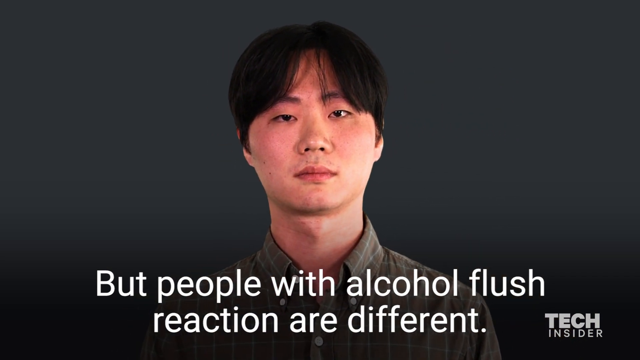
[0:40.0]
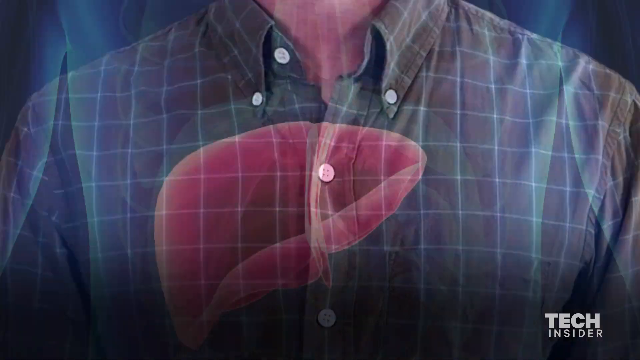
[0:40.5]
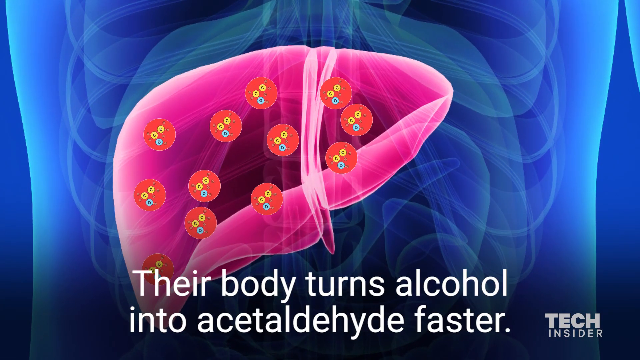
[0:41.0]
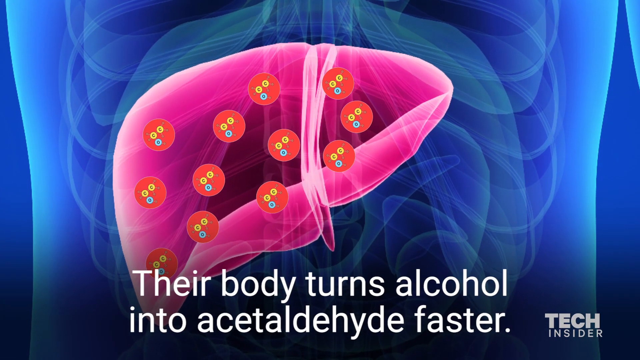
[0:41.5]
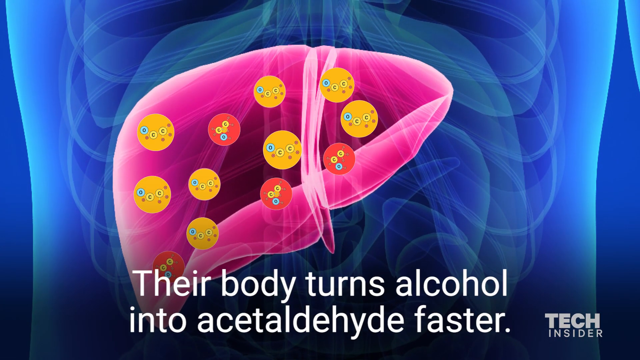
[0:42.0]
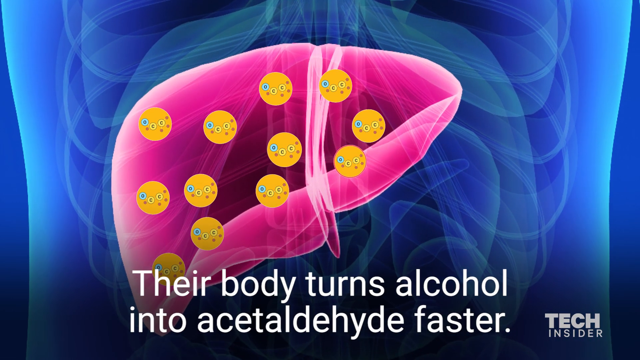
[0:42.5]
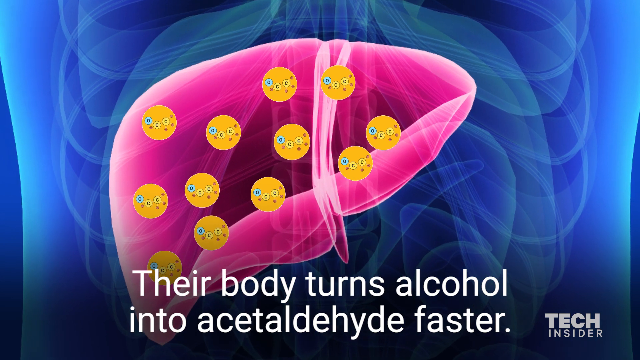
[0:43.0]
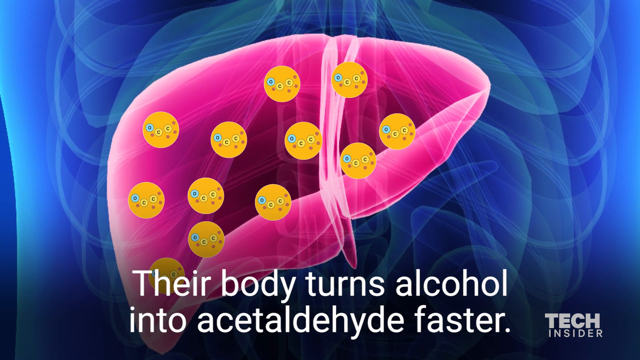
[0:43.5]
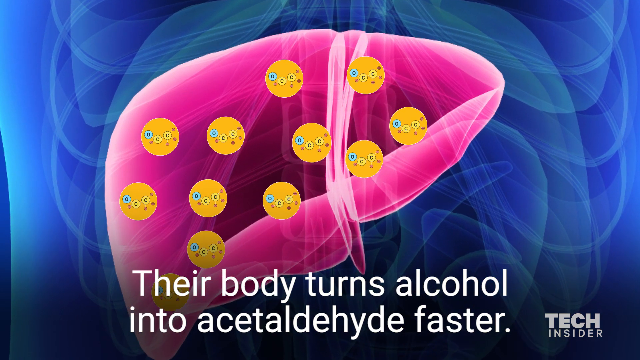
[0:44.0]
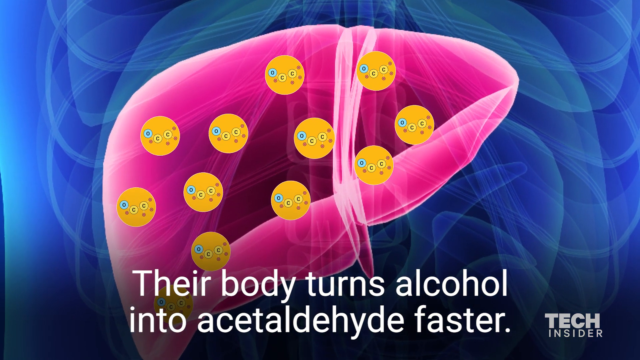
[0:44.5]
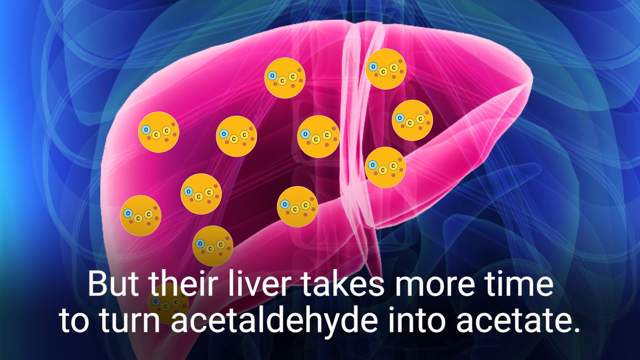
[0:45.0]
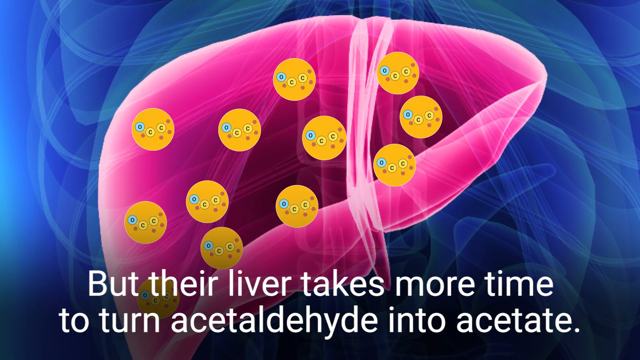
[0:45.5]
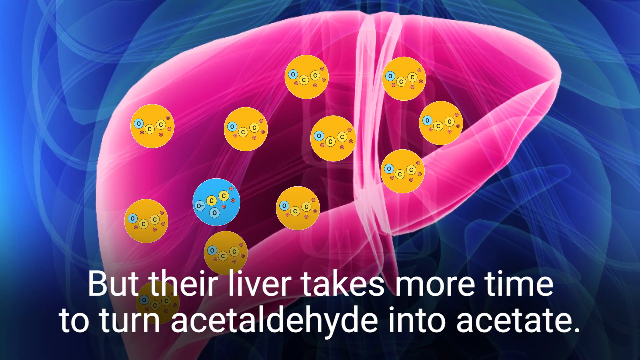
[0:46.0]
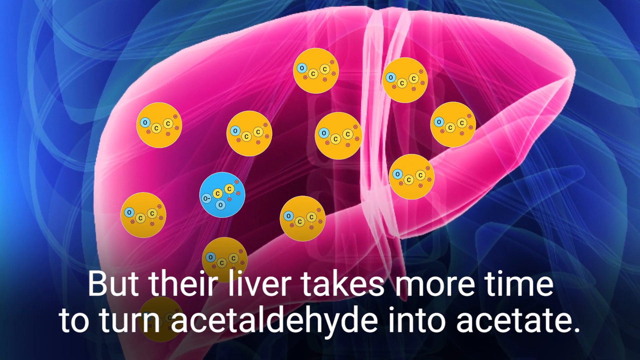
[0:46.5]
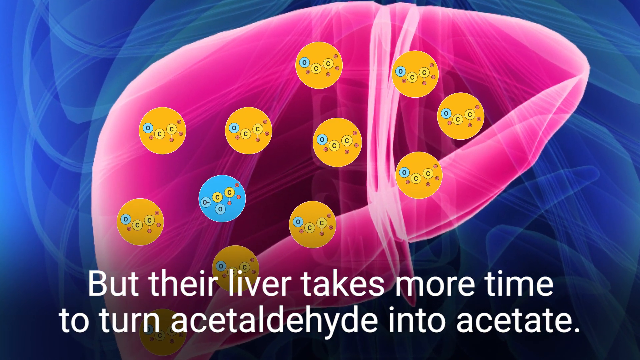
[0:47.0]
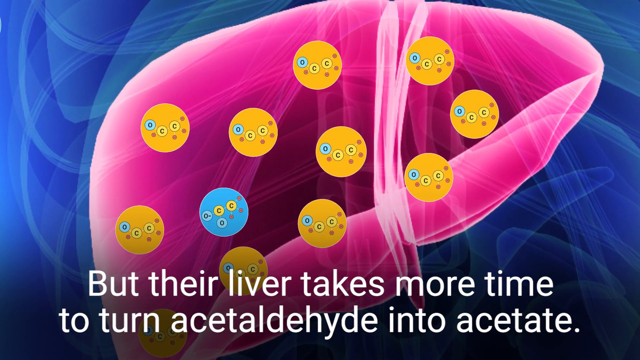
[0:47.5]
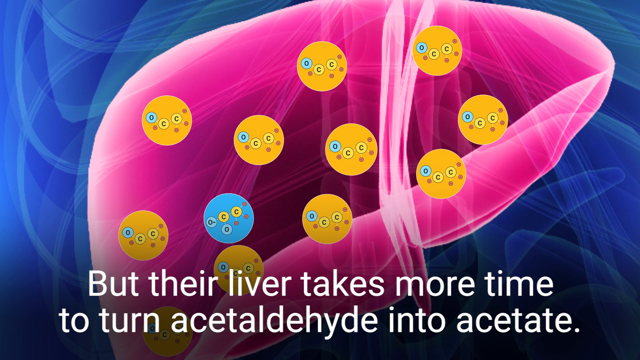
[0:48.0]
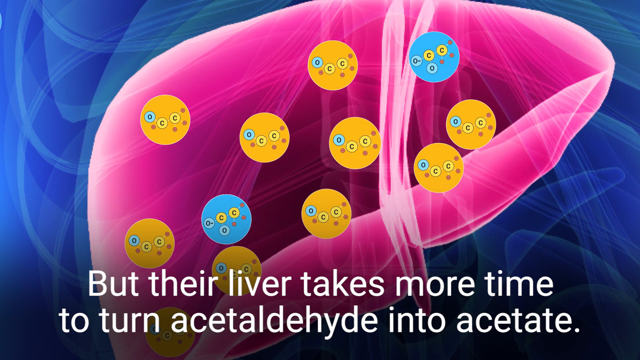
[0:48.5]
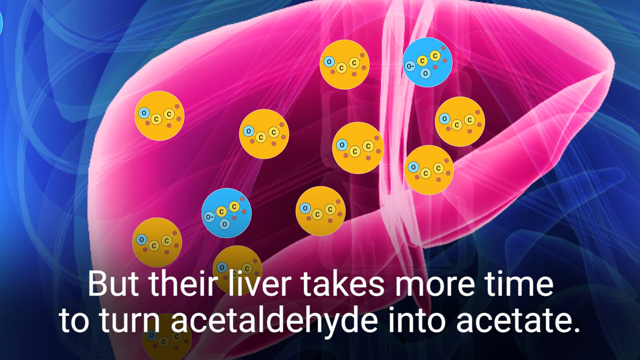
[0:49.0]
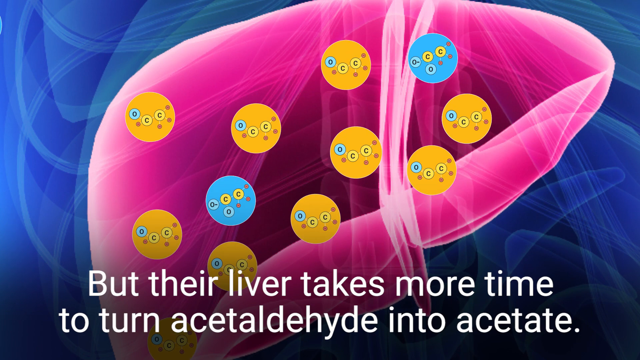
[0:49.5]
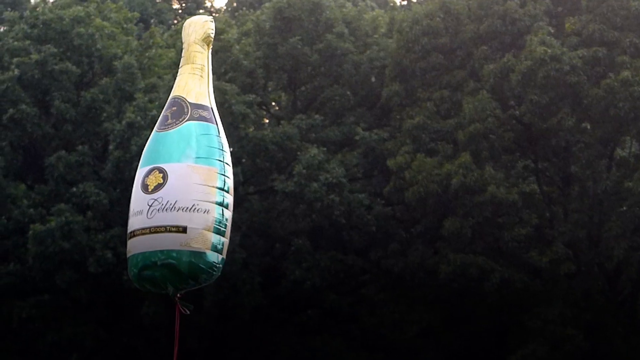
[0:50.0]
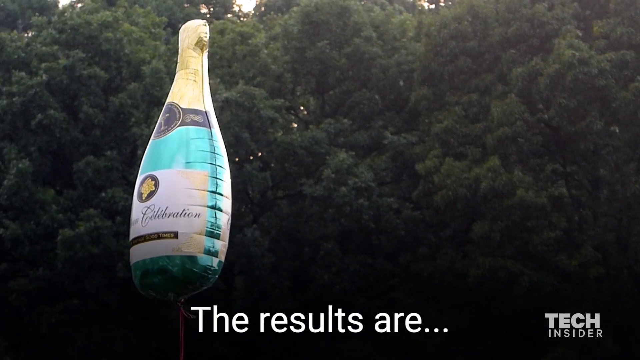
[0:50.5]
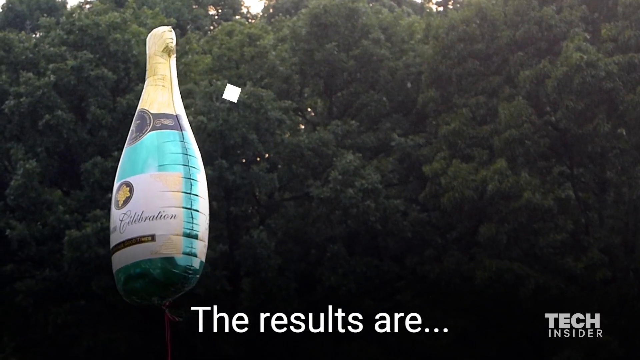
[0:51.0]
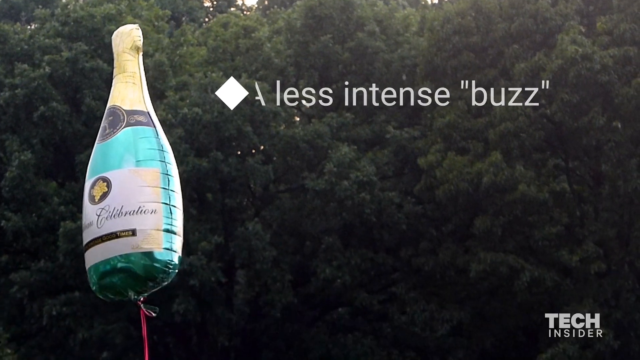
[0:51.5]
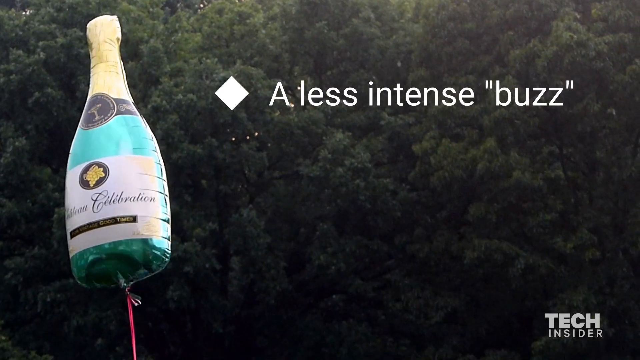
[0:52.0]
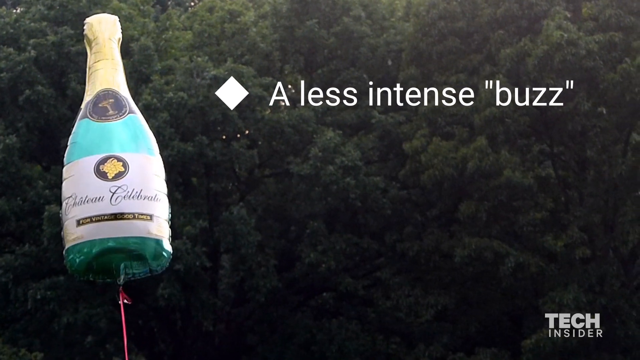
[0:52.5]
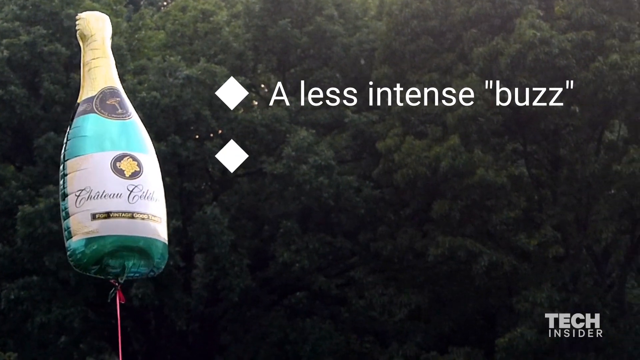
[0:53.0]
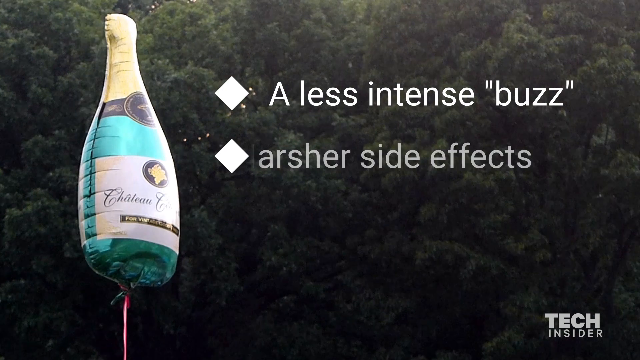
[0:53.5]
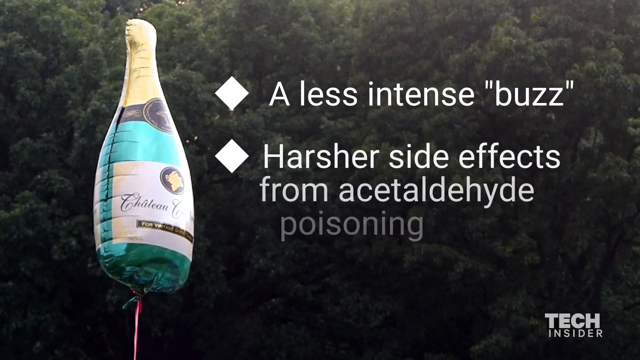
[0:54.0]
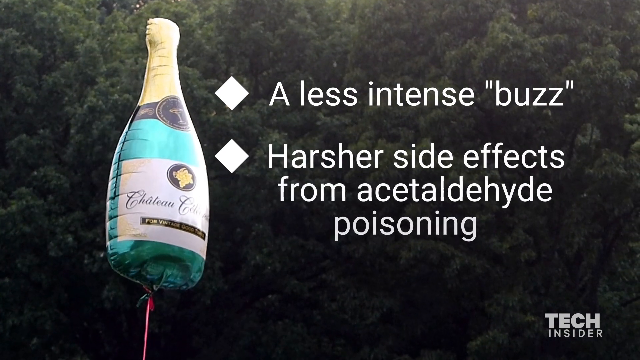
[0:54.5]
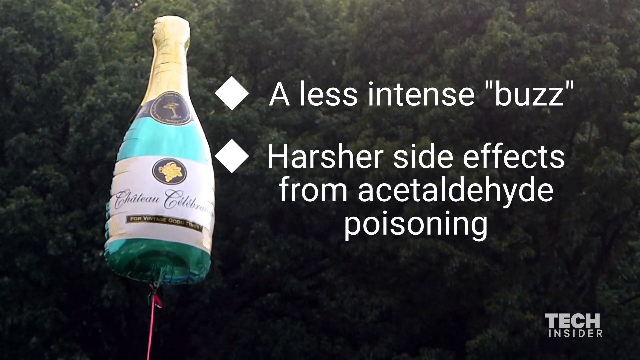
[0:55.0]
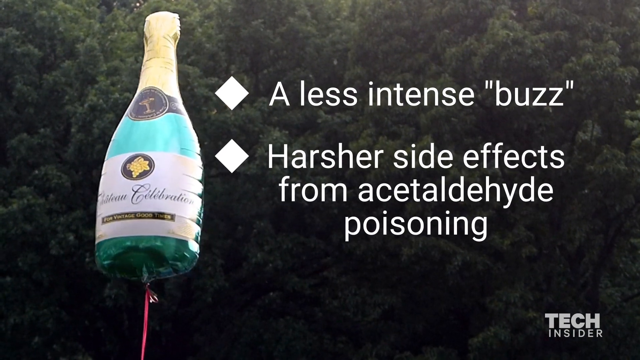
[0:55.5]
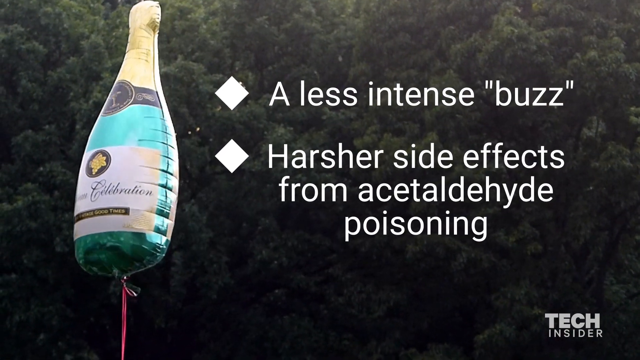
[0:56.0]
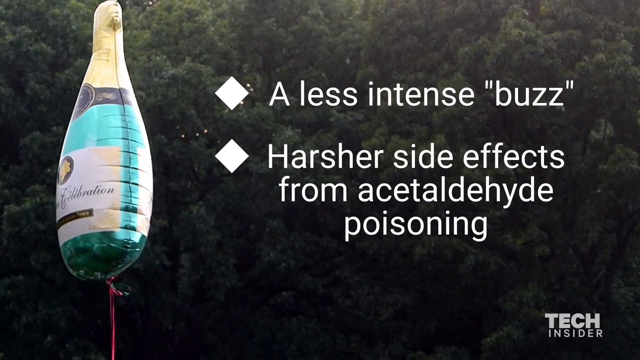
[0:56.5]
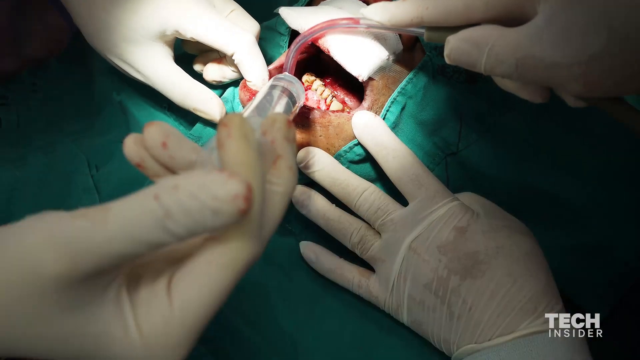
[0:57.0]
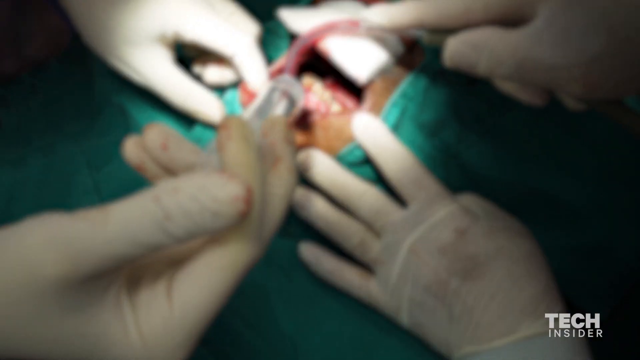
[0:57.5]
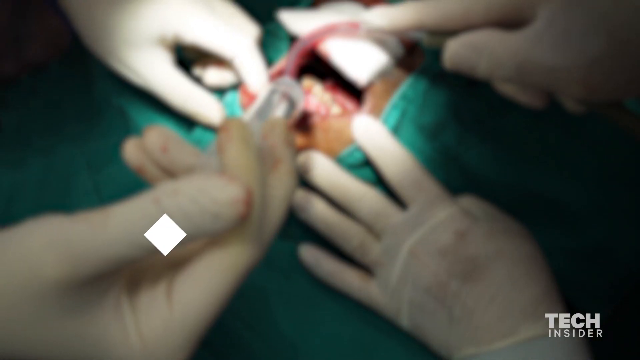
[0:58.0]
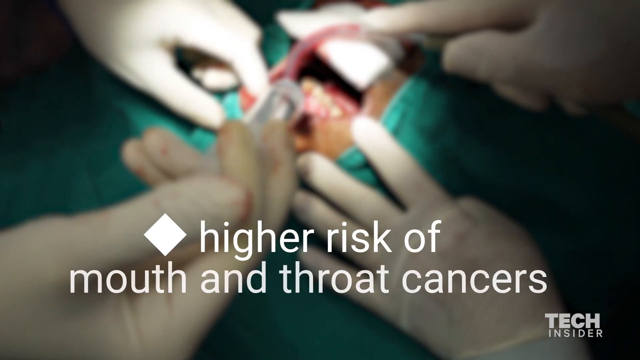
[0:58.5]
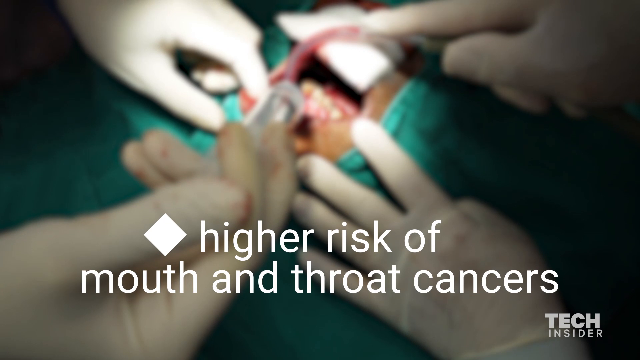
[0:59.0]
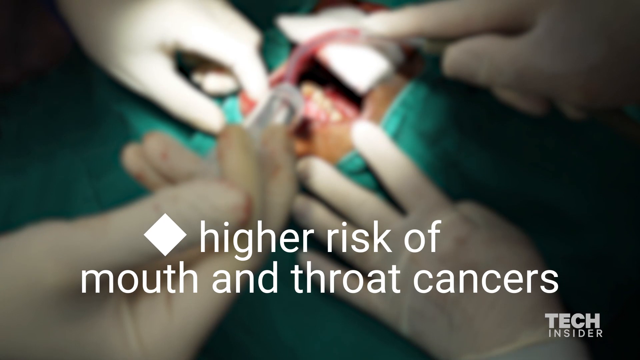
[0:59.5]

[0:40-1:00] The Asian man in the brown check shirt stands in front of a dark gray background, facing the camera. The camera quickly zooms in and pans down to his chest, where an image of a liver is superimposed, which transforms into an animation: a close-up of a blue-toned x-ray of a human torso with a bright pink organ in the centre representing the liver. Several red circles hover inside the liver, and text at the bottom of the screen reads "their body turns alcohol into acetaldehyde faster". The red circles suddenly become yellow and hover slightly. The text then reads "but their liver takes more time to turn acetaldehyde into acetate". One by one the yellow circles begin to turn blue, but only two of them do so before the footage changes. The next scene shows dense trees covering the screen, with a large foil balloon in the shape of a bottle of champagne in the centre left. Text across the bottom reads "the results are", and a list in white text appears over the trees on the right of the screen: "a less intense buzz, harsher side effects from acetaldehyde poisoning". Finally, an image shows a person being operated on. Four hands come into the shot from each of the four corners of the screen, each wearing a white latex glove, with blood visible on most of the gloves. In the centre, part of a surgical procedure is being carried out on a human. Beneath the surgeons' hands, aqua surgical cloth covers the patient, with a hole in the centre where an incision has been made and part of a human organ is visible. In the top right corner a white-gloved hand holds a tube, and blood seems to be either coming out of or going into it. The image becomes blurry and white text appears across the bottom of the screen reading "higher risk of mouth and throat cancers".